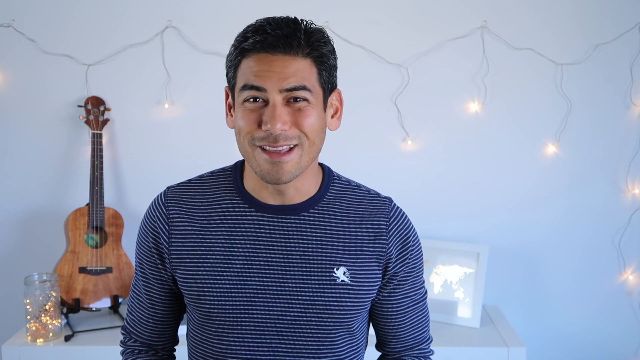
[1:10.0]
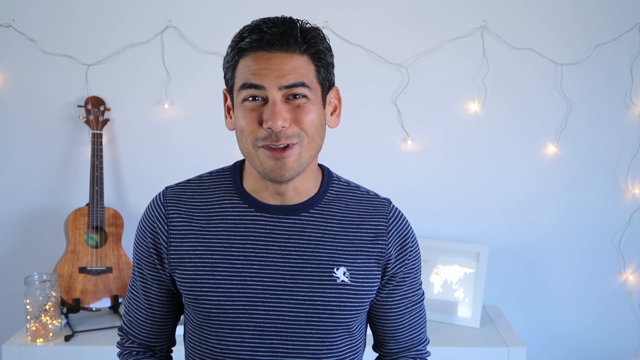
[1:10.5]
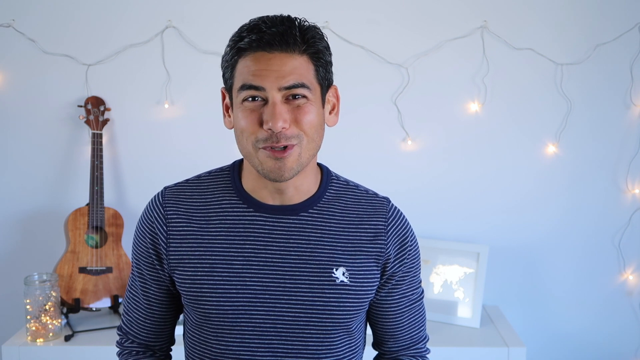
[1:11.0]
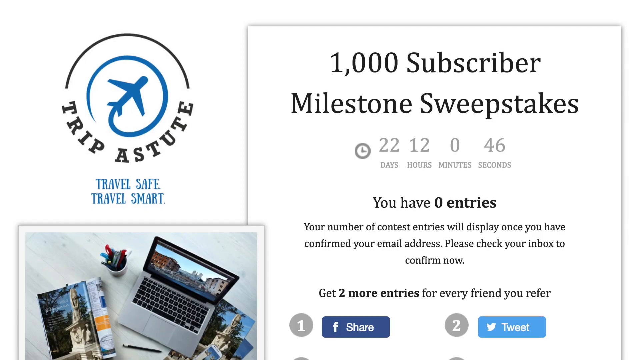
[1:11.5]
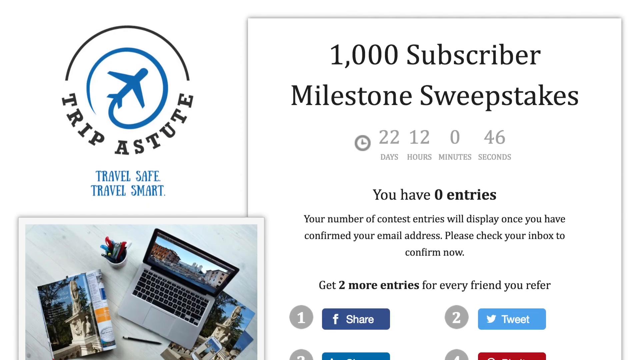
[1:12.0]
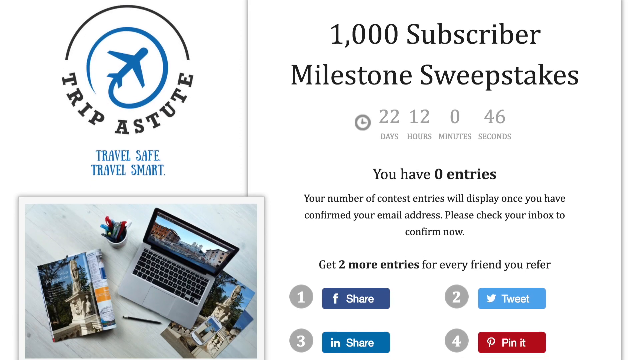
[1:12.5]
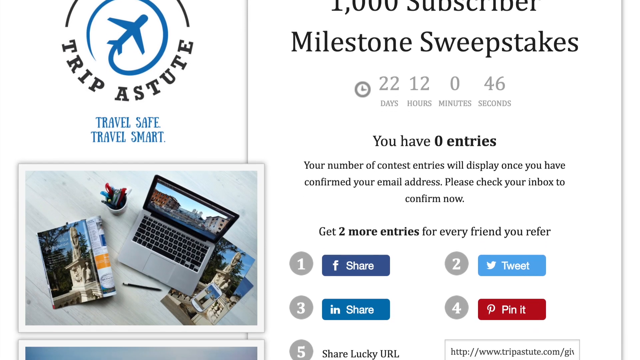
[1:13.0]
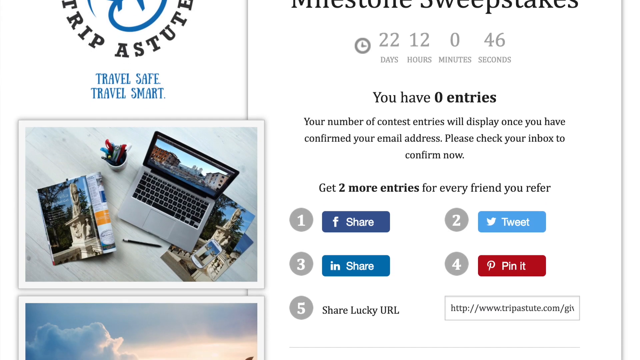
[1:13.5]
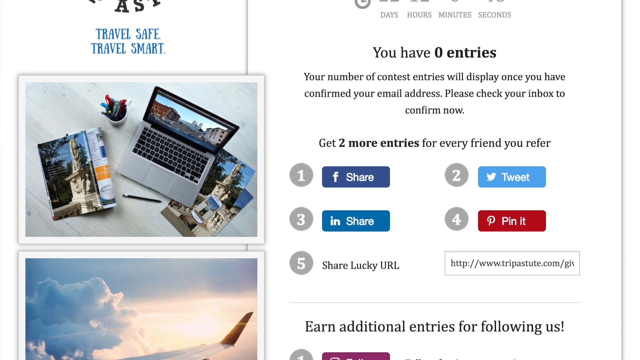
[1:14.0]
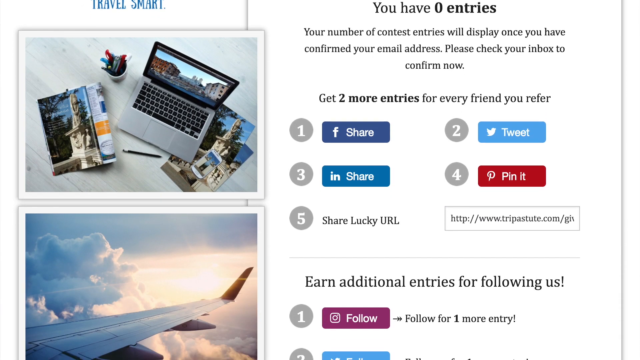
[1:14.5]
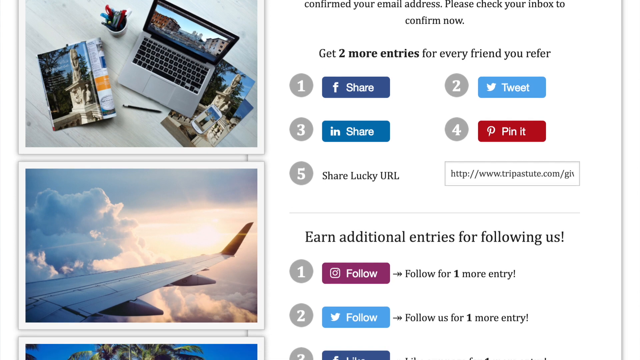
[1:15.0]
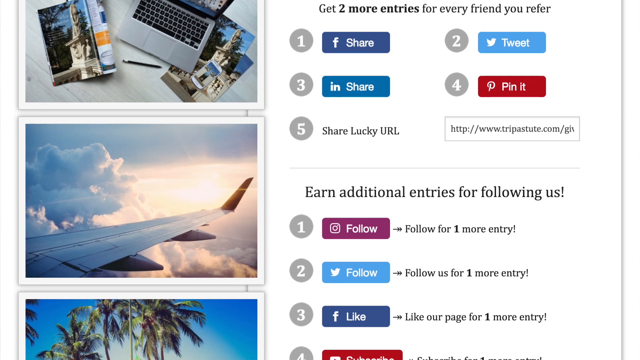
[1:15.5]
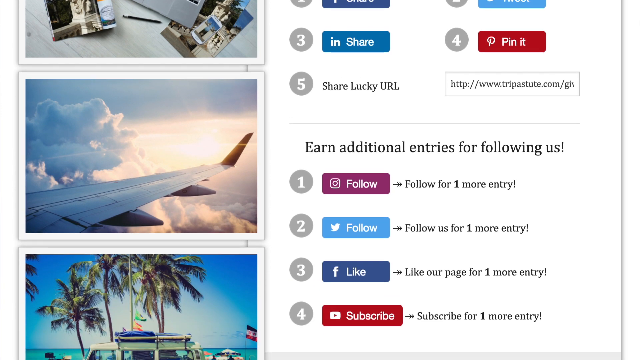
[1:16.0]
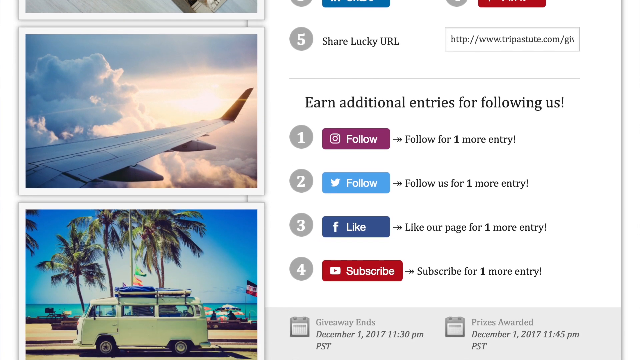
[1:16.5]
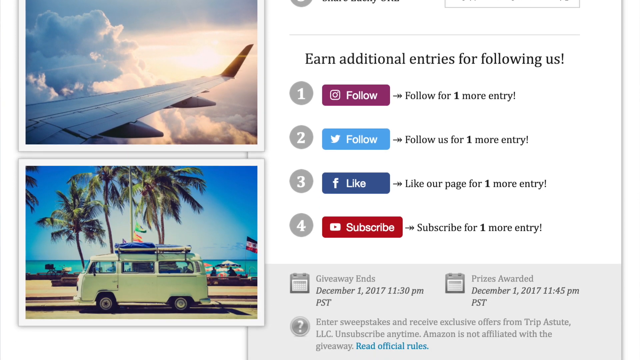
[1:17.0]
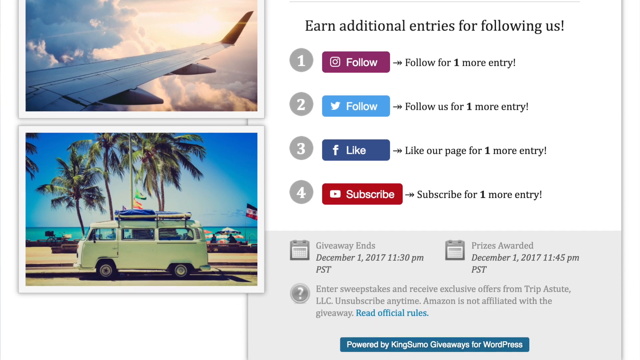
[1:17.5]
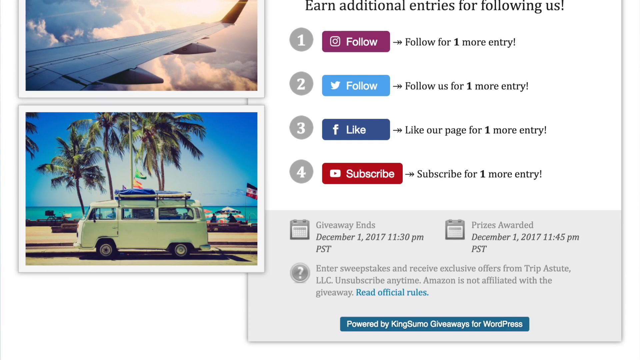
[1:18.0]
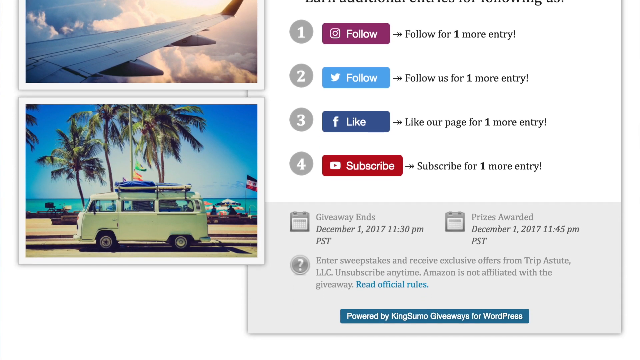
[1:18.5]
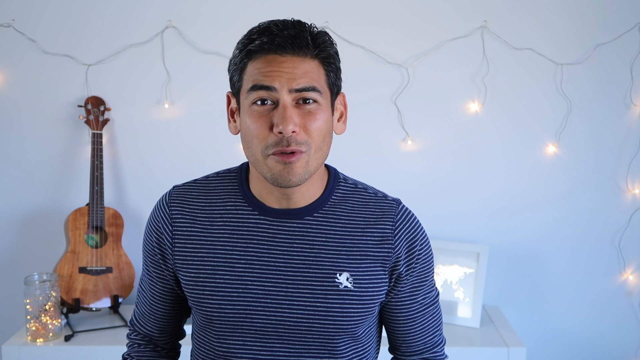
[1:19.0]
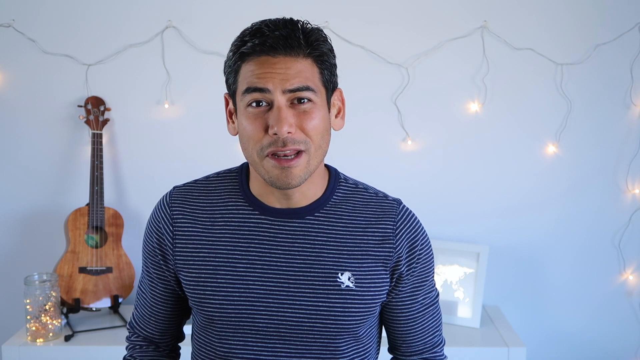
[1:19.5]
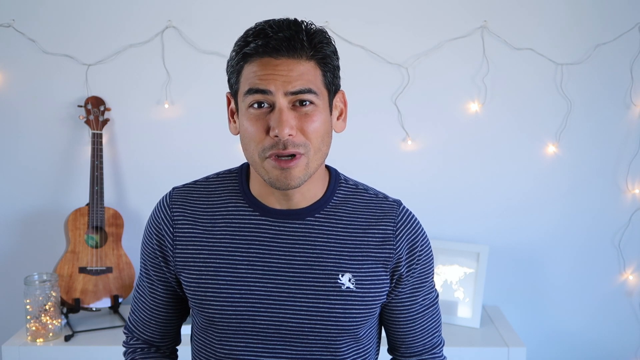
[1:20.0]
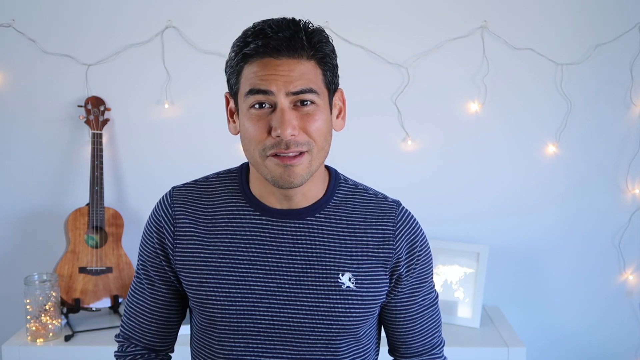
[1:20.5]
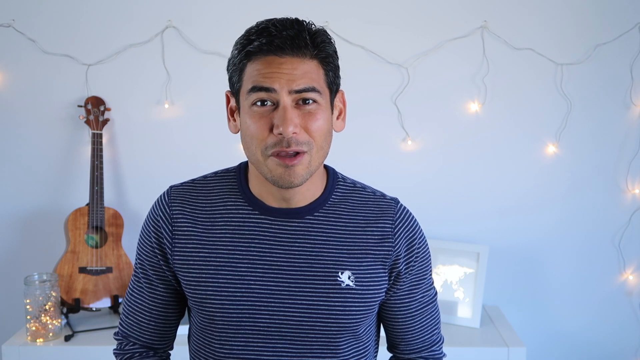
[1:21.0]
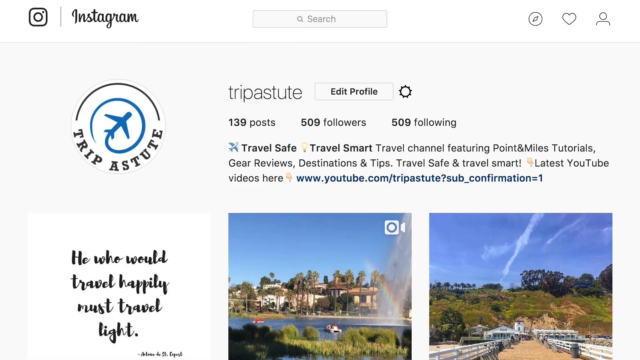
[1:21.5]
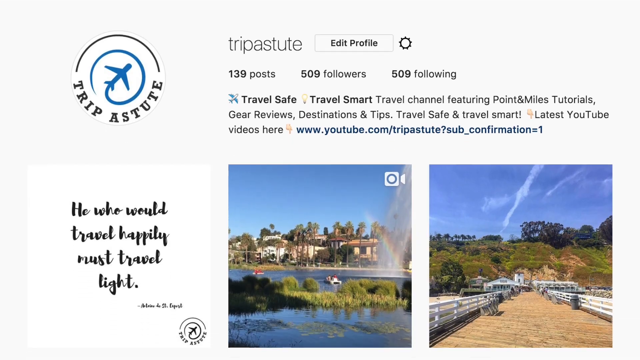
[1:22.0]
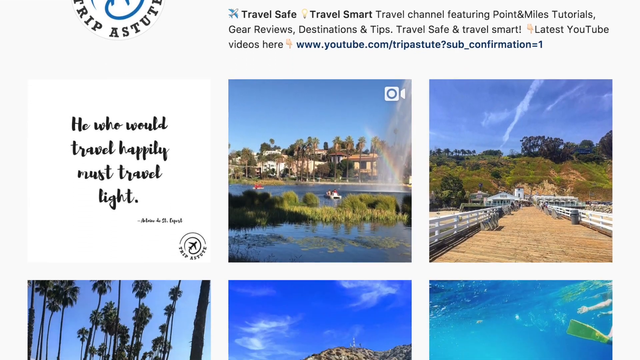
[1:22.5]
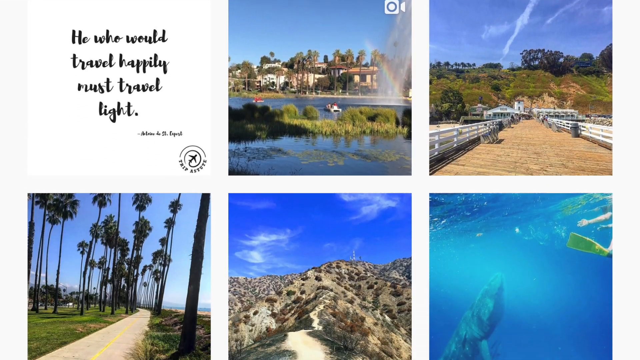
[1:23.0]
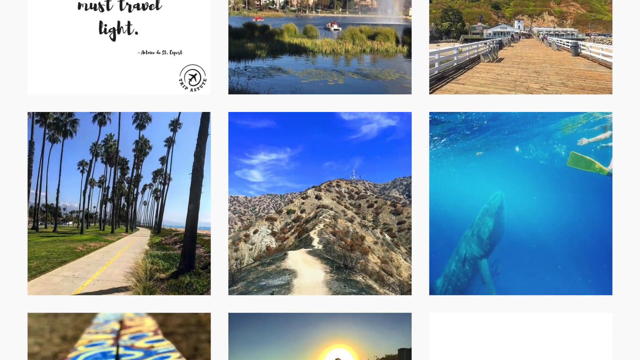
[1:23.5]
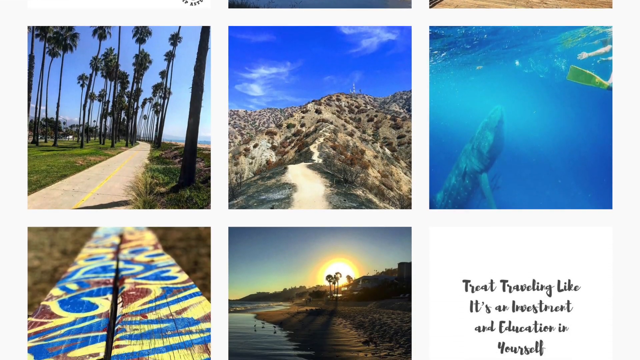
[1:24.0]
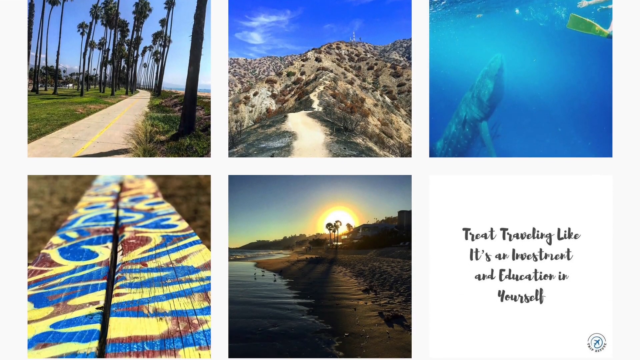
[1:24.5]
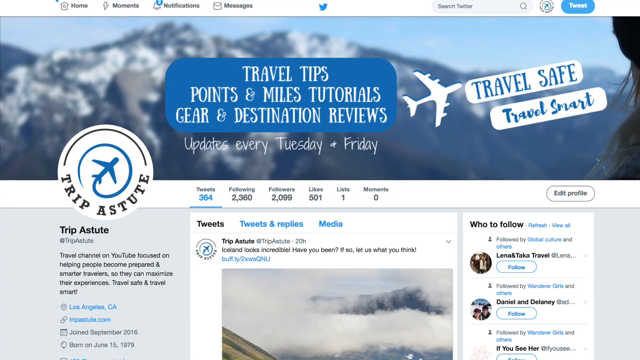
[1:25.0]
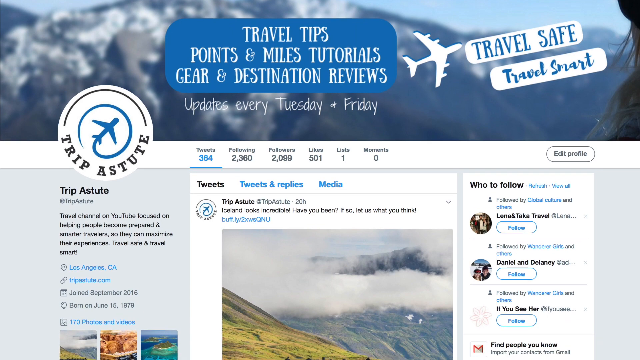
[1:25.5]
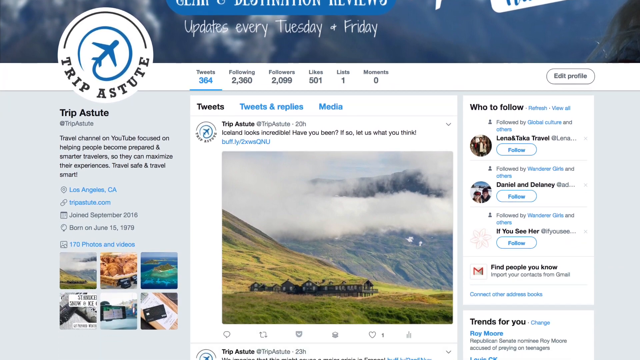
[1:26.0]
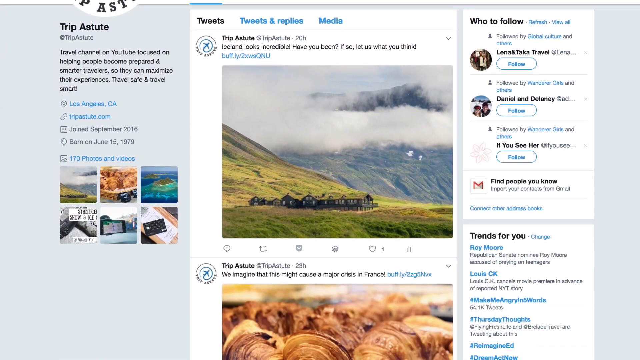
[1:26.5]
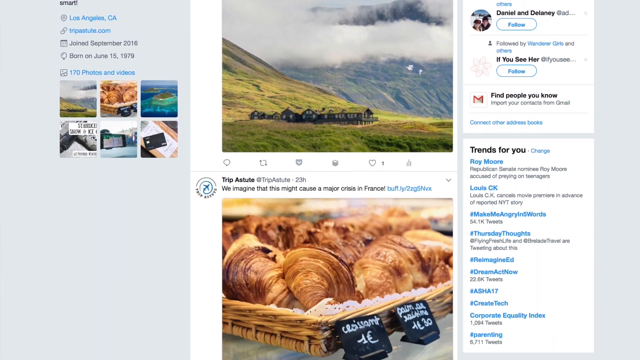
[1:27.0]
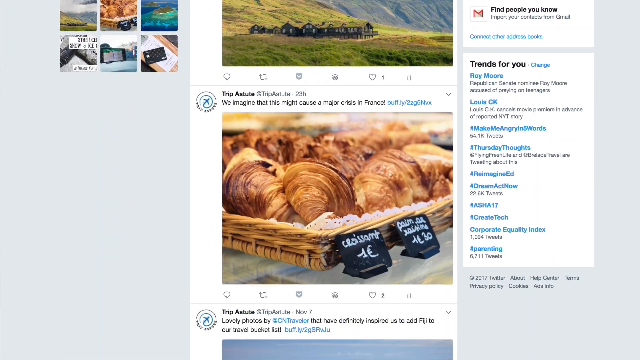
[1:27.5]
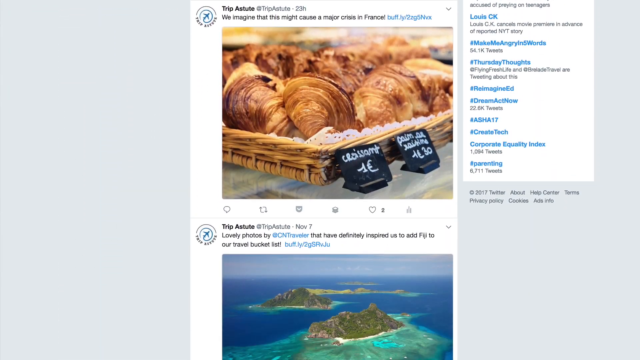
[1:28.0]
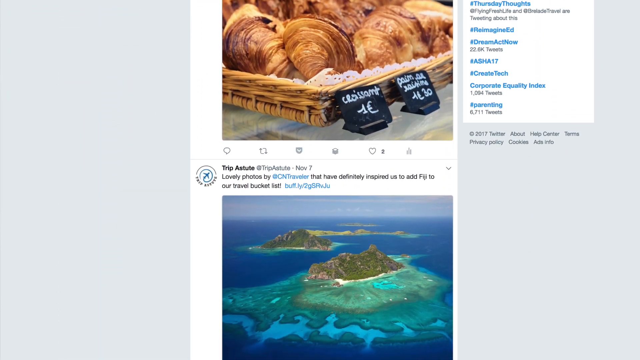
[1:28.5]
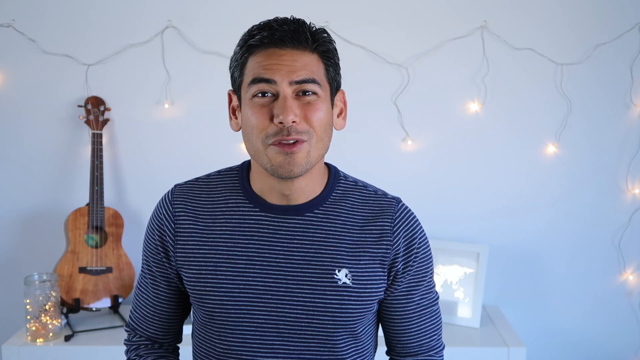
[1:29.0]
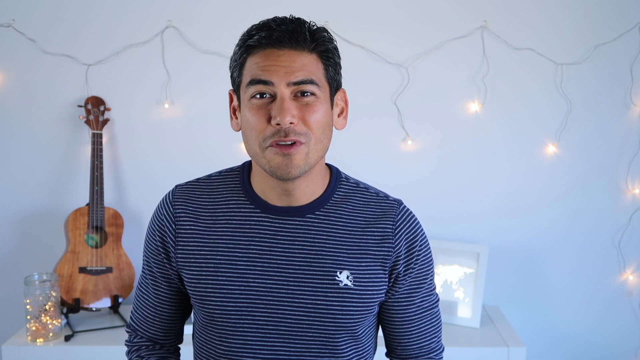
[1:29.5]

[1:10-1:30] The presenter, who runs a YouTube channel called Trip Astute, is in his room. The video switches to a page from his site showing the thousand subscriber milestone sweepstakes, which still has time to complete, and showing that the viewer has zero entries. It scrolls down through a number of options for getting more entries, such as sharing on Facebook, Twitter and LinkedIn. On the left-hand side of the site are various travel photos of buses, planes and other things. Additional methods of gaining points are shown, such as following on Instagram, Facebook and Twitter or subscribing on YouTube. The page scrolls to the very bottom, and the video returns to the presenter in the room. He then shows a page of his site with many holiday snaps; the text on this Trip Astute page reads "he who would travel happily must travel light", and it shows scenes of trees, rivers, lakes and mountains. It then scrolls to another link showing an island and food.